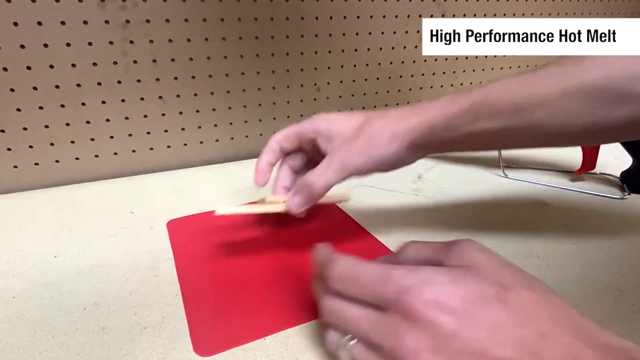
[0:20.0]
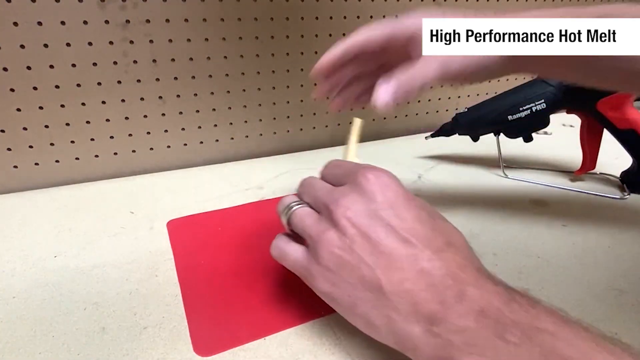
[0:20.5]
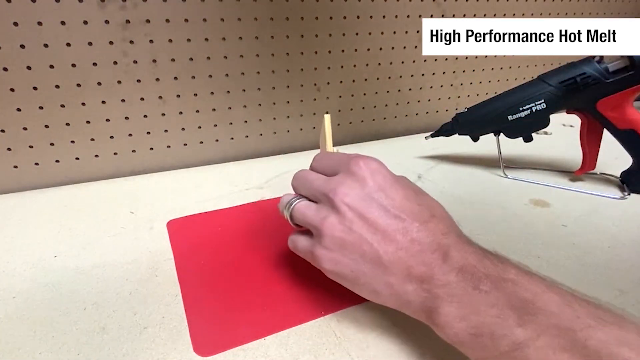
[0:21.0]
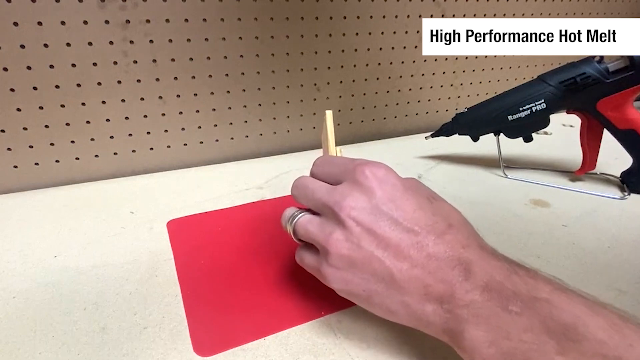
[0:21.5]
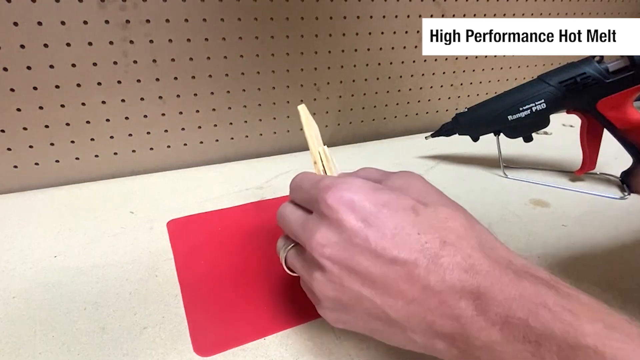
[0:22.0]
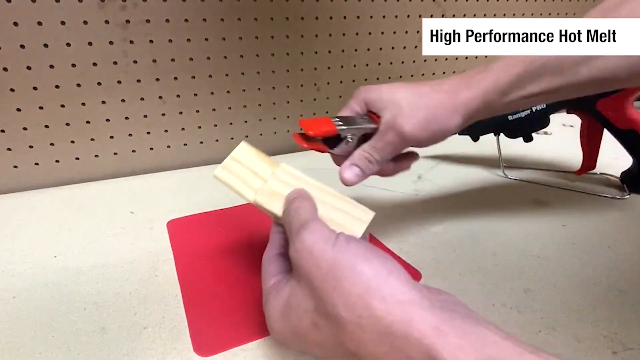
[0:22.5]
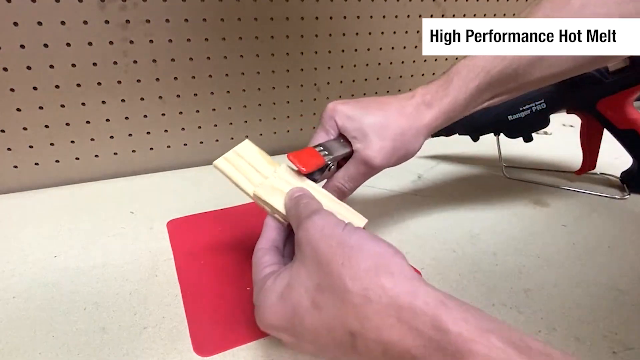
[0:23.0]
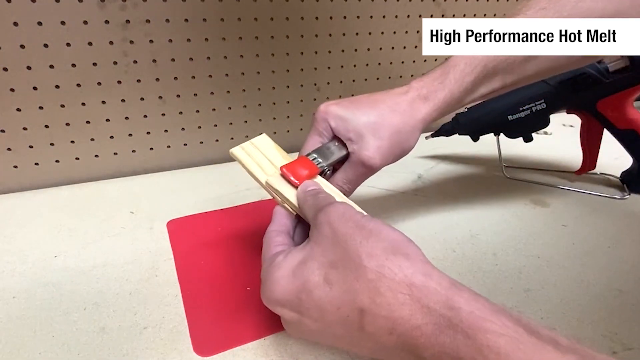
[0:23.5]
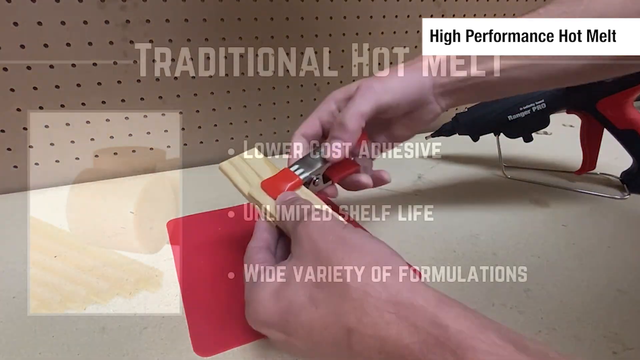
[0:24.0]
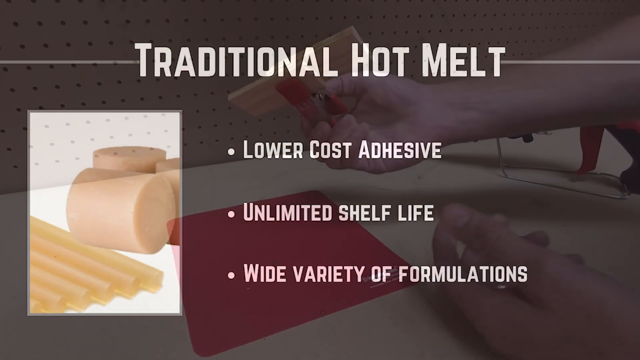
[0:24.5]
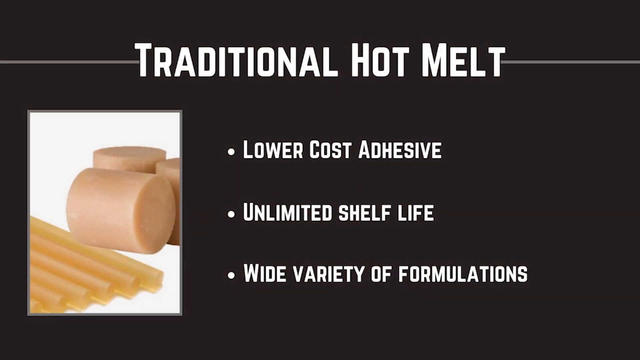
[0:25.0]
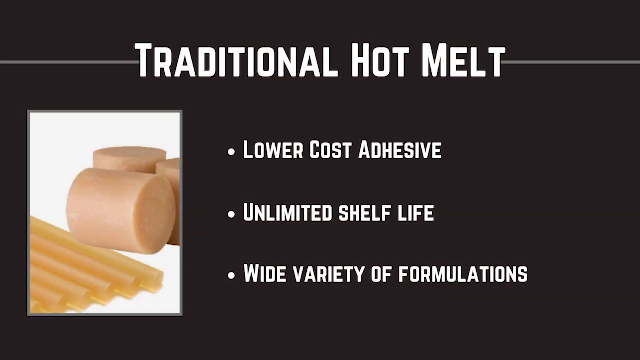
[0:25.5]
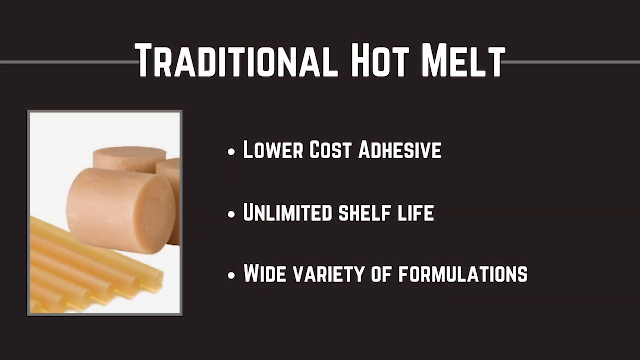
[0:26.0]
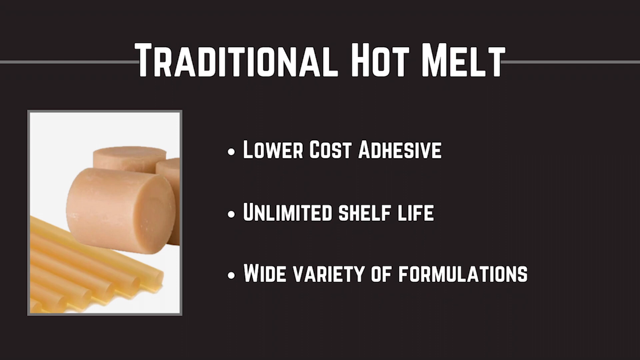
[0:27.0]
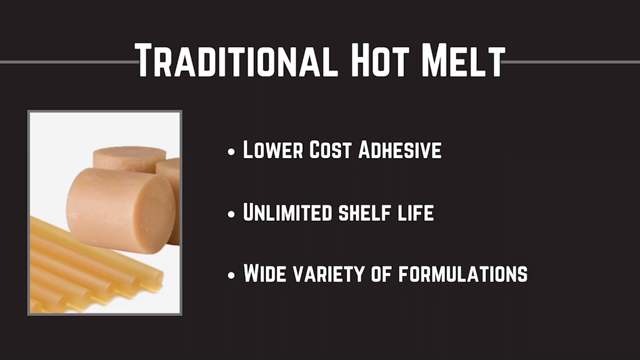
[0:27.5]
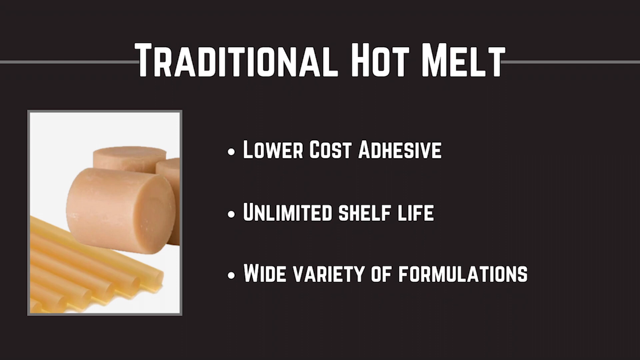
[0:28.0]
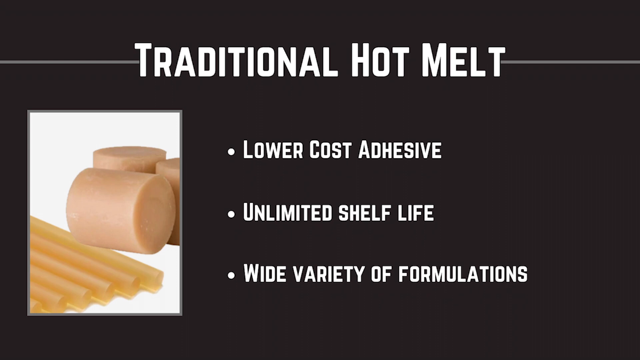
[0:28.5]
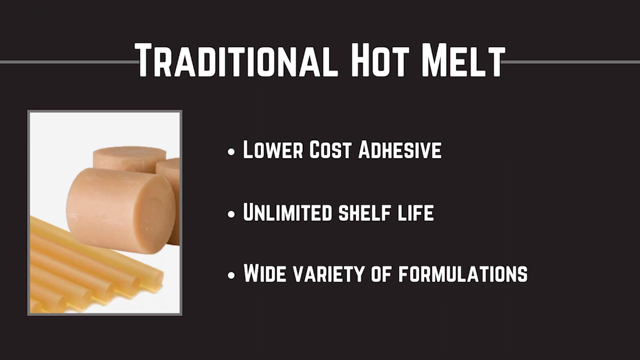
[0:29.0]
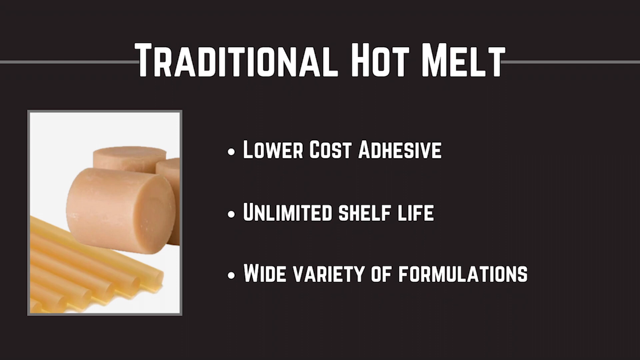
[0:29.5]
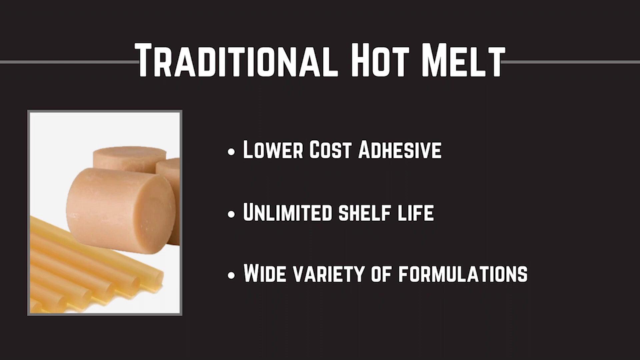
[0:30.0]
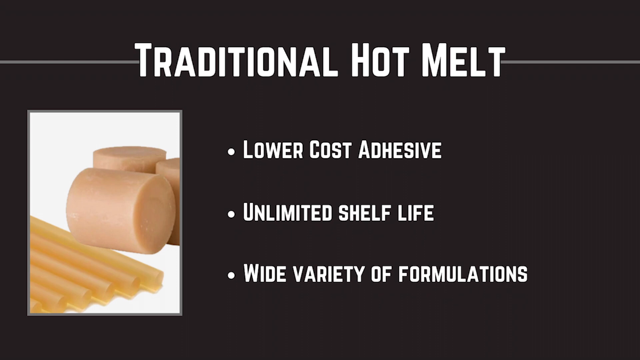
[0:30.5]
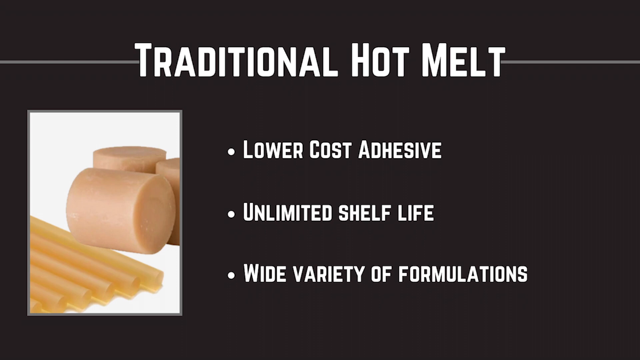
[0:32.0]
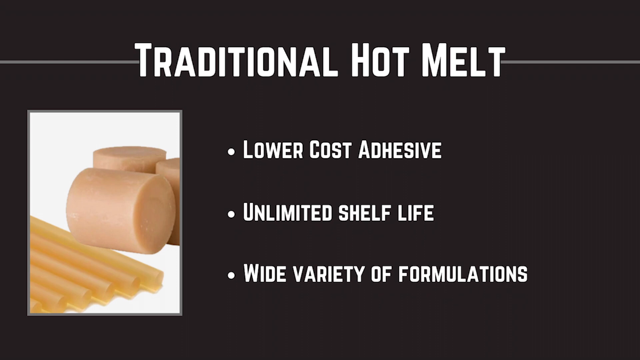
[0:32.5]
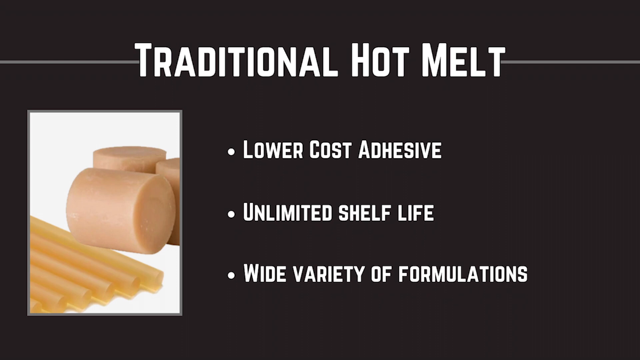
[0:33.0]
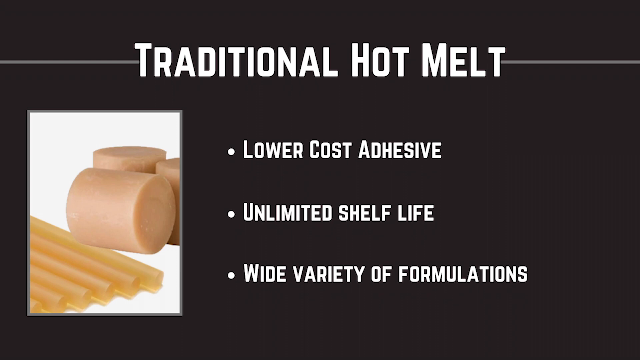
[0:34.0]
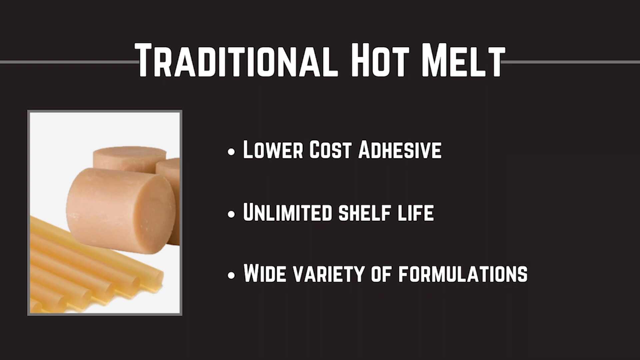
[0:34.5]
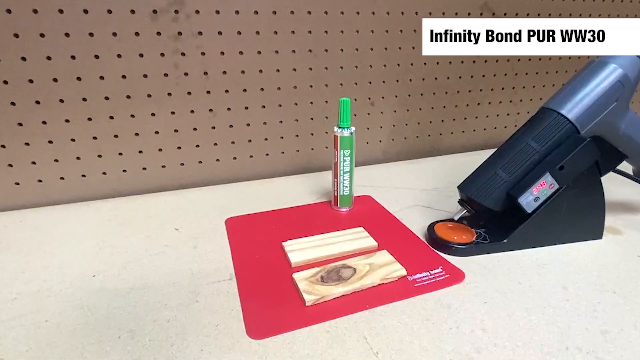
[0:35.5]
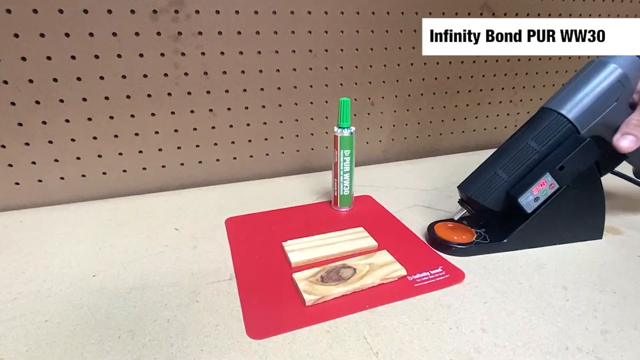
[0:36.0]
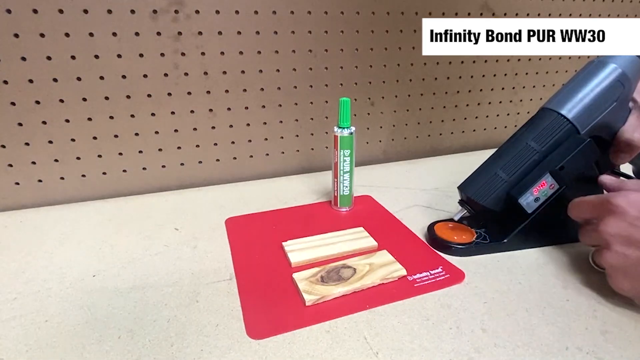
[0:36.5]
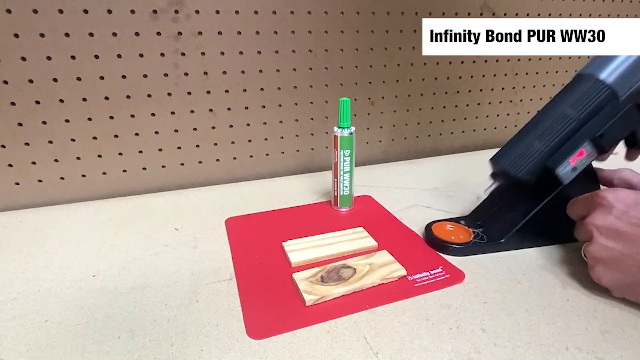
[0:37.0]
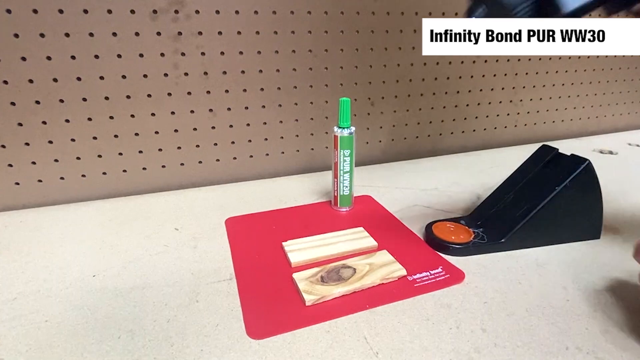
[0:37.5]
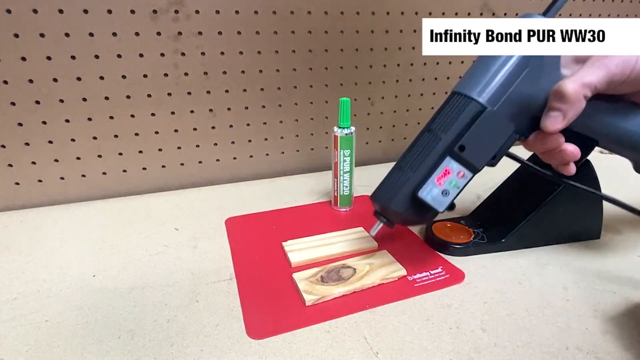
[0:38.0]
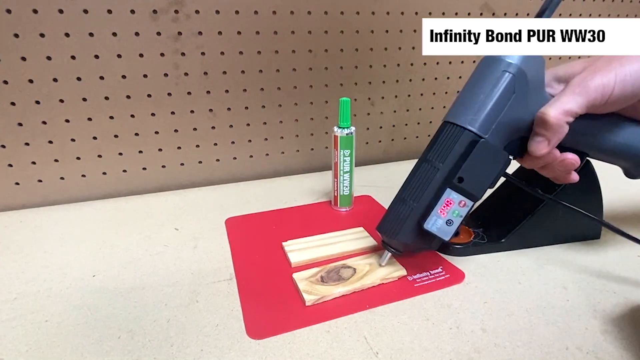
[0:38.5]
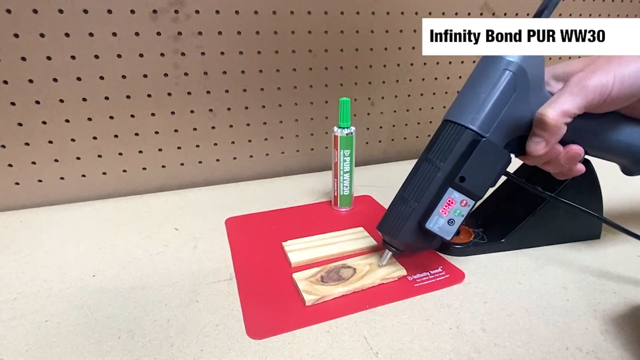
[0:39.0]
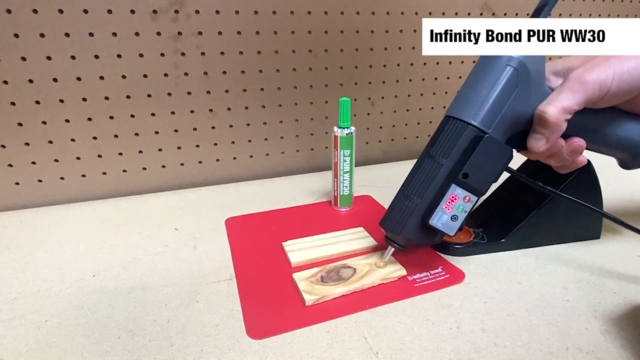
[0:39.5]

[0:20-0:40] Only the person's hands are visible; their face and body are off screen. The title in this segment is "High Performance Hot Melt". After glue is squirted onto a piece of wood and another piece is placed on top, a metal clamp with red clips is placed on the area where the wood overlaps and is held by the glue. A static slide follows that says "Traditional Hot Melt", with three bullet points: "lower cost adhesive", "unlimited shelf life" and "wide variety of formulations". The text is in a white, all-caps, narrow font against a black background, with a picture of traditional glue stick products on the left side of the screen.